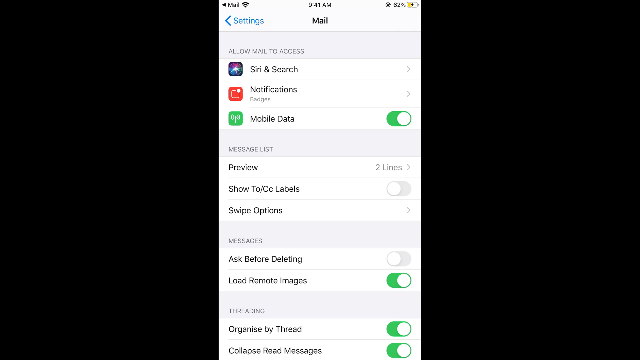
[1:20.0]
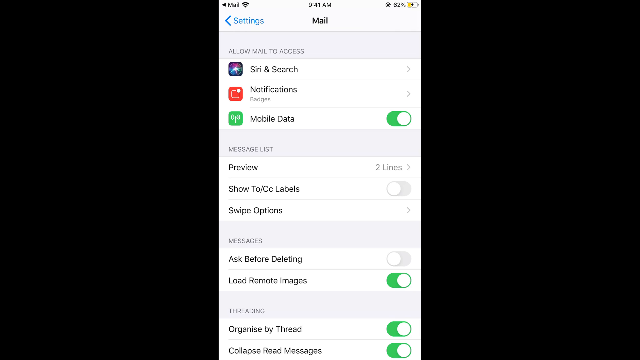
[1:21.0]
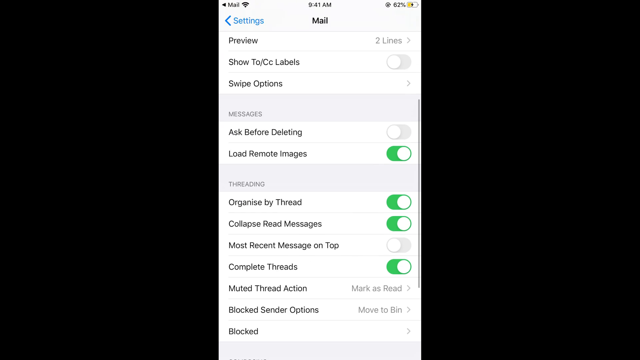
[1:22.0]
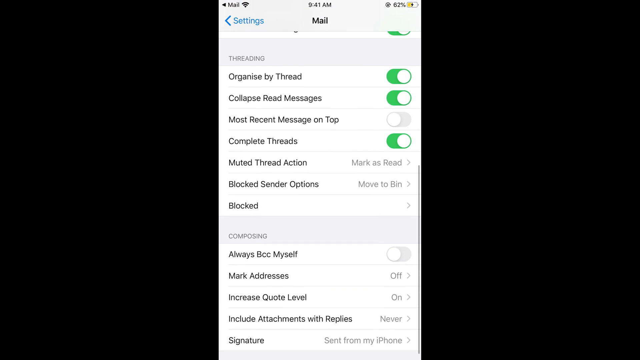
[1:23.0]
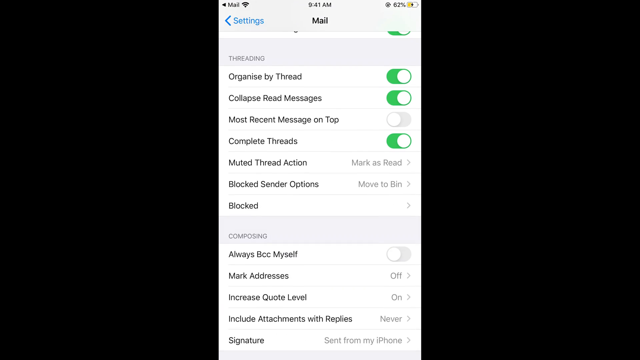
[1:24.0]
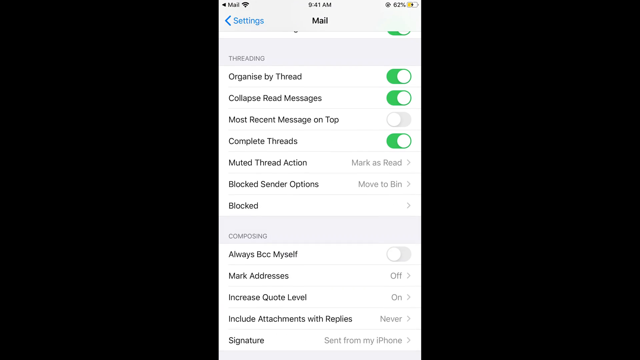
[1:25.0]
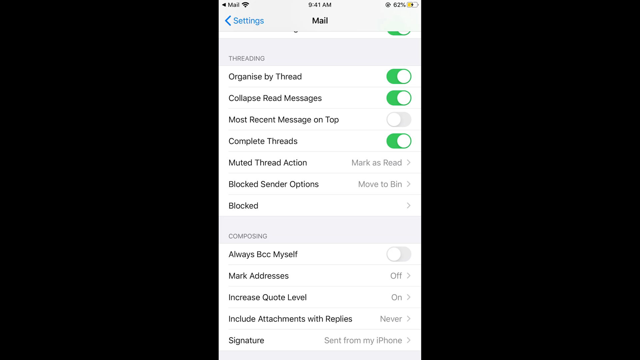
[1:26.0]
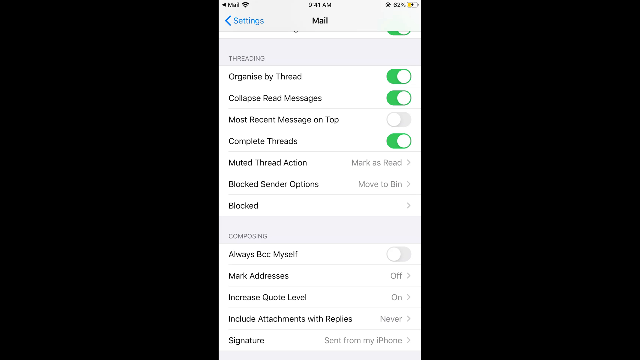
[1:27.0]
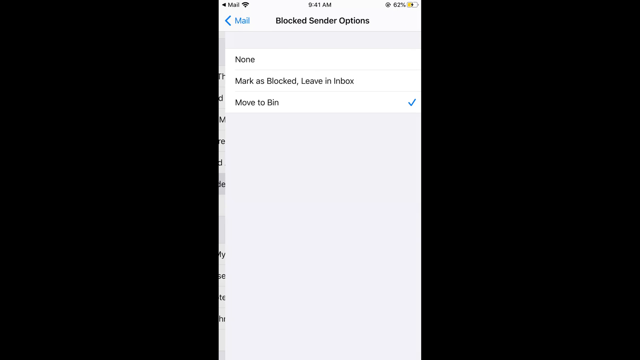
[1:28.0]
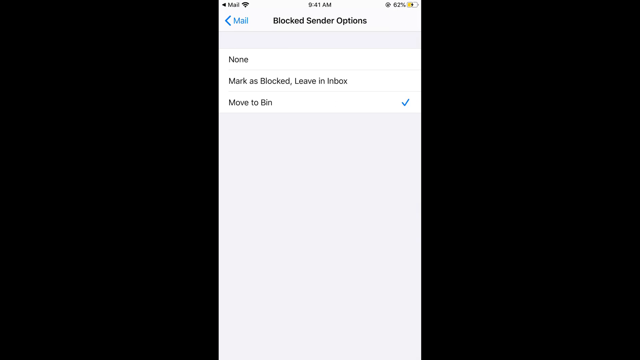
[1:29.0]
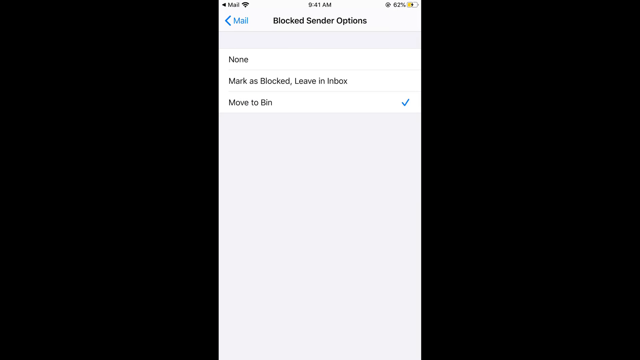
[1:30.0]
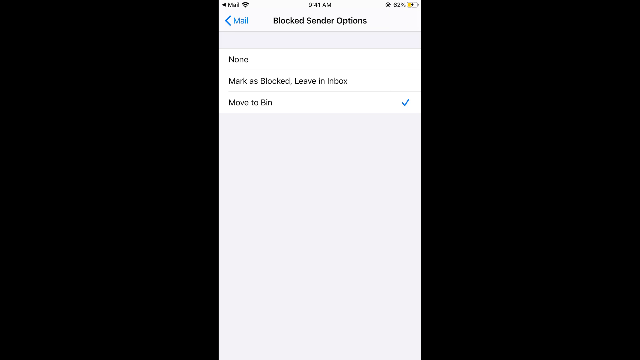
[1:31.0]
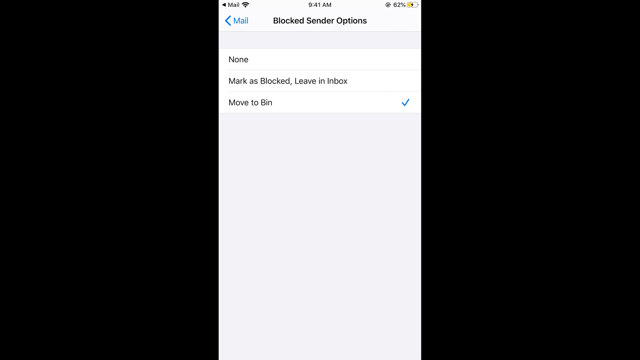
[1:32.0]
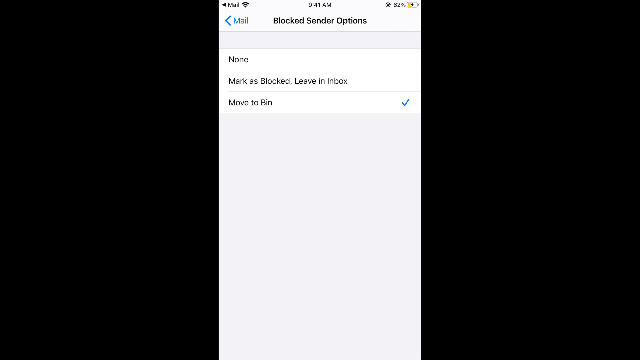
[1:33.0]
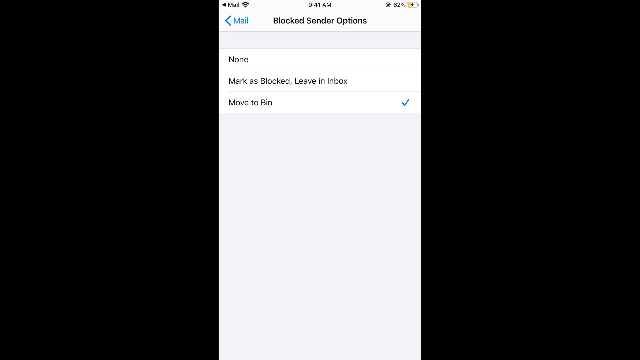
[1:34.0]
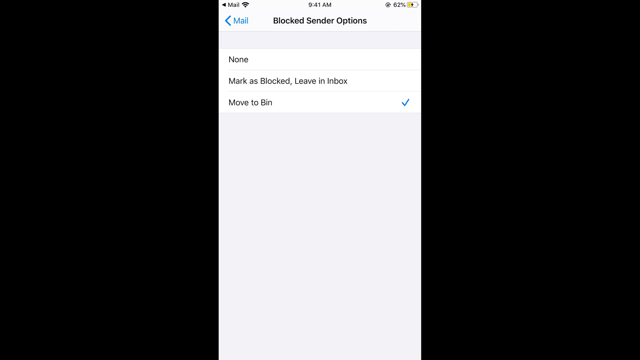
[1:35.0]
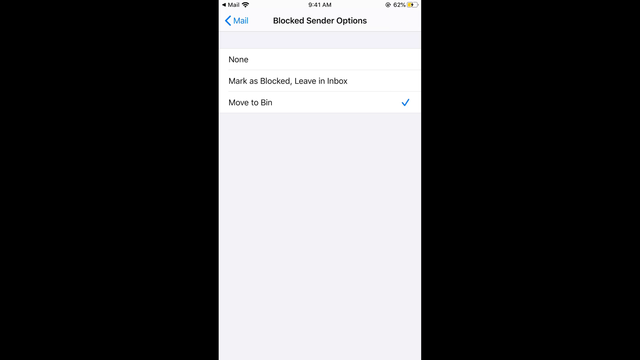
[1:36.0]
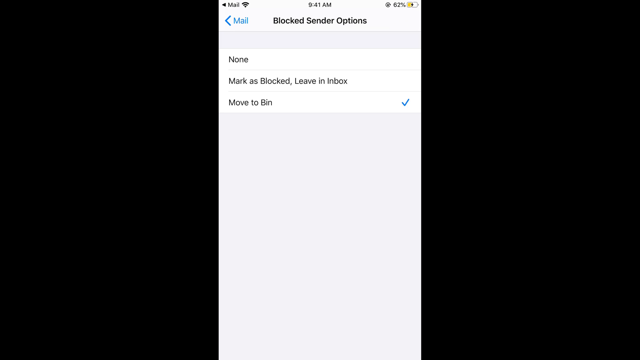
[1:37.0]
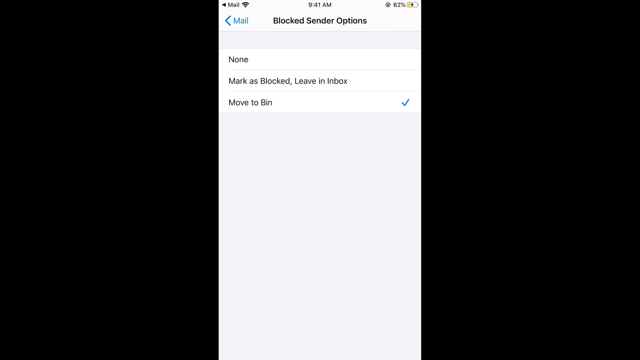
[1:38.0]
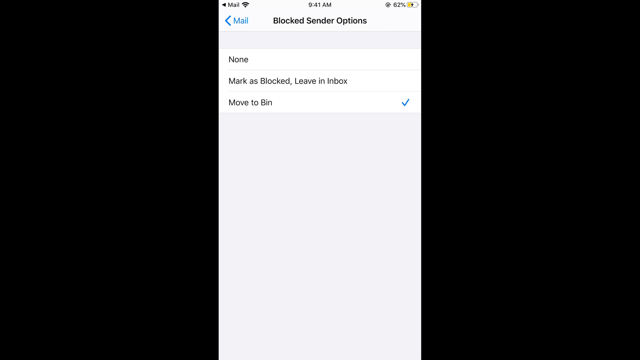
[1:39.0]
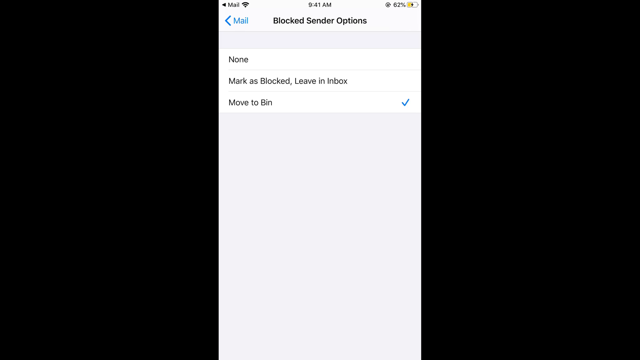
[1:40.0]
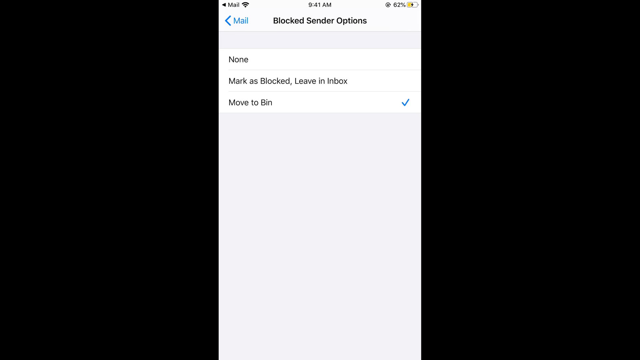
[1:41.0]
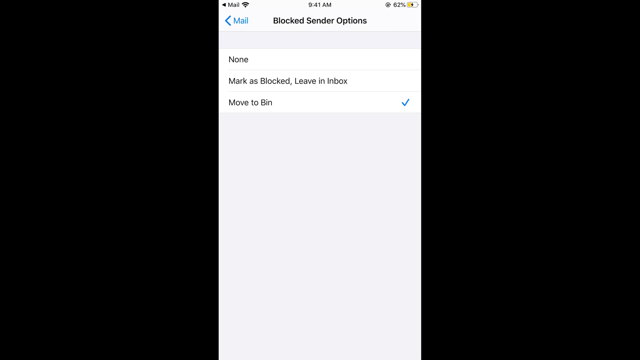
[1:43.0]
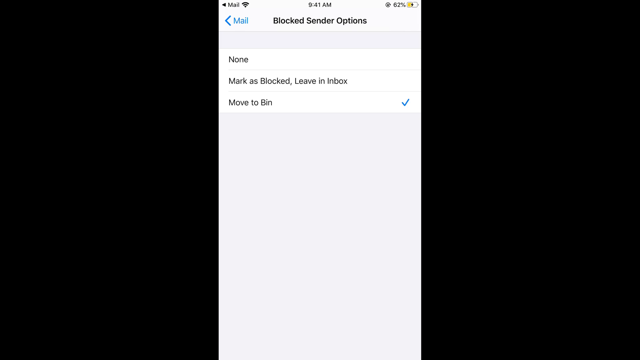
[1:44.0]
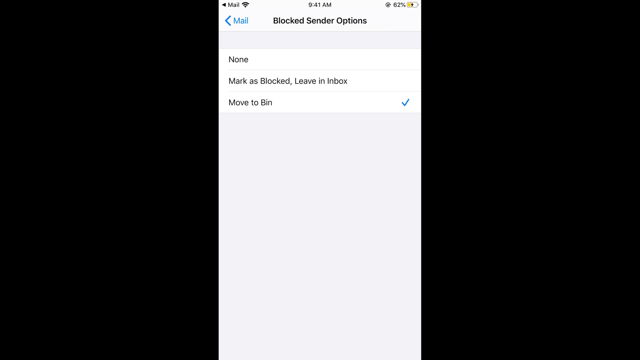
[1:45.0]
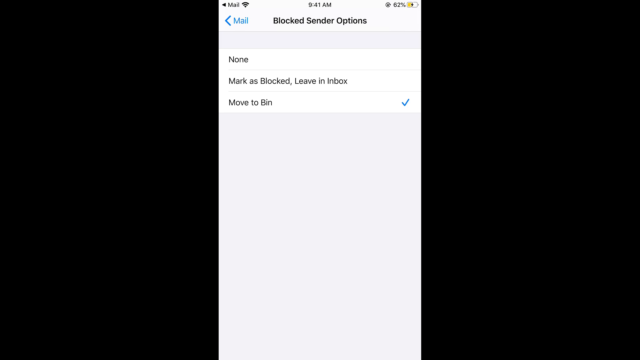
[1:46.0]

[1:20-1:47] The video returns to Mail settings, which list Siri and Search, Notifications, Mobile Data, Preview, Show To/CC Labels, Swipe Options, Ask Before Deleting and Load Remote Images. It scrolls down to show further options: Ask Before Deleting, Load Remote Images, Organize by Thread, Collapse Read Messages, Most Recent Messages on Top, Complete Threads, Muted Thread Action, Blocked Sender Options, Blocked, Always BCC Myself, Increase Quote Level and Include Attachments with Replies. The Blocked Sender Options screen then opens, showing "none", "mark as blocked, leave in inbox" and "move to bin", which has a tick on it. The screen then stays on Blocked Sender Options without changing.